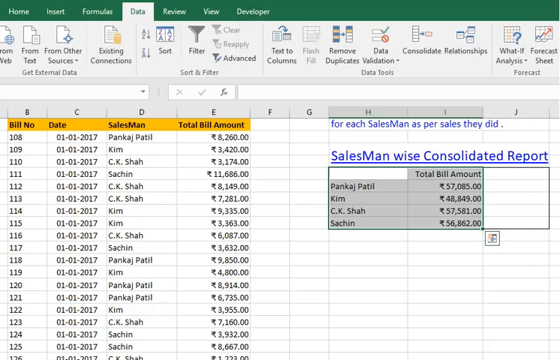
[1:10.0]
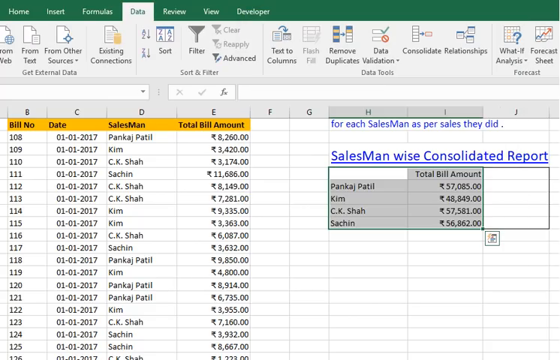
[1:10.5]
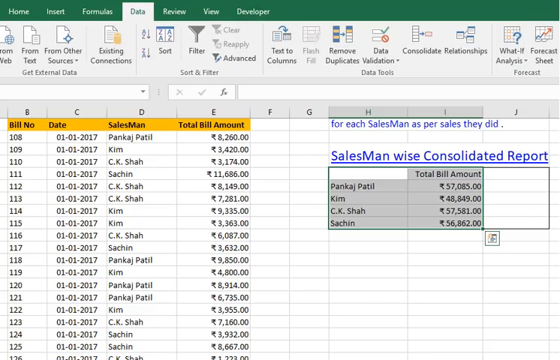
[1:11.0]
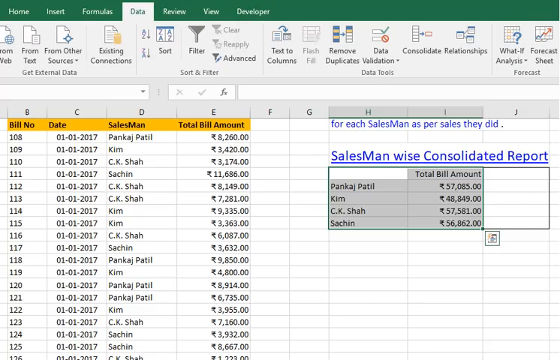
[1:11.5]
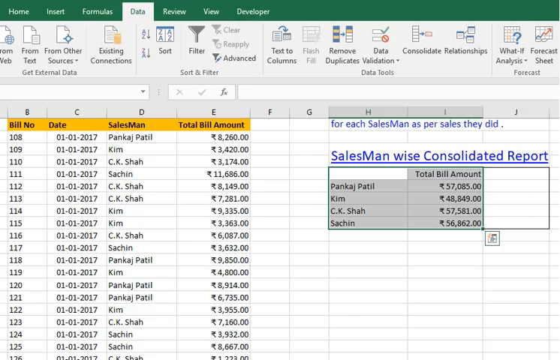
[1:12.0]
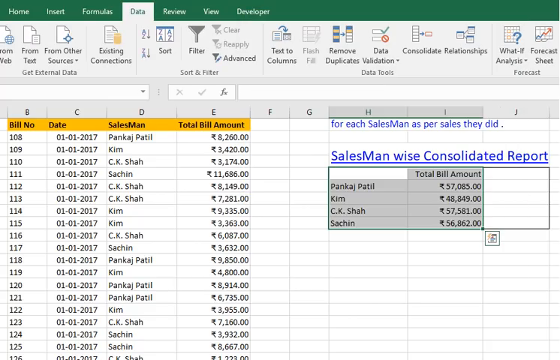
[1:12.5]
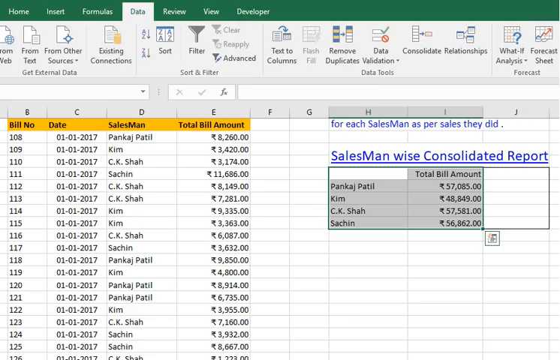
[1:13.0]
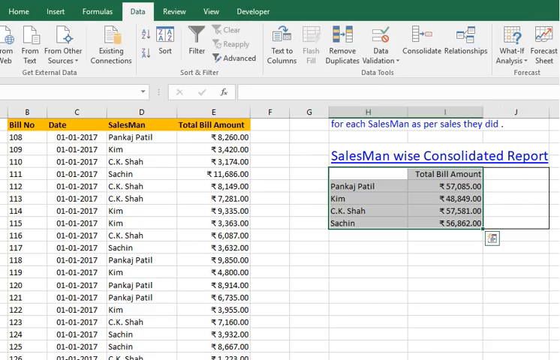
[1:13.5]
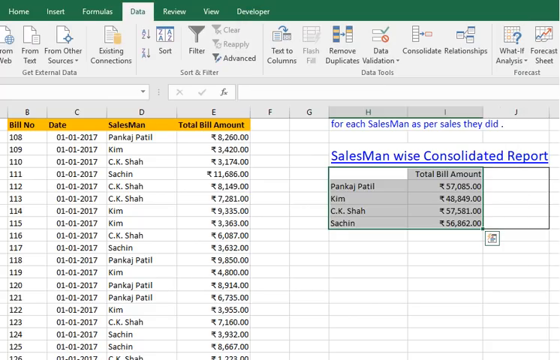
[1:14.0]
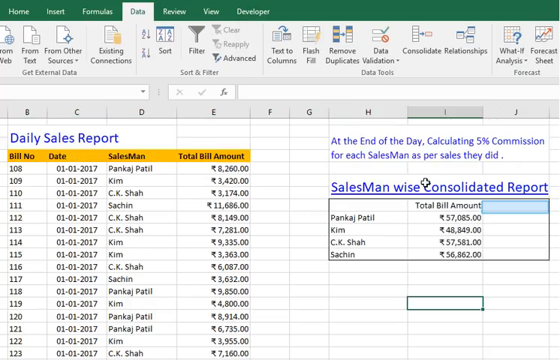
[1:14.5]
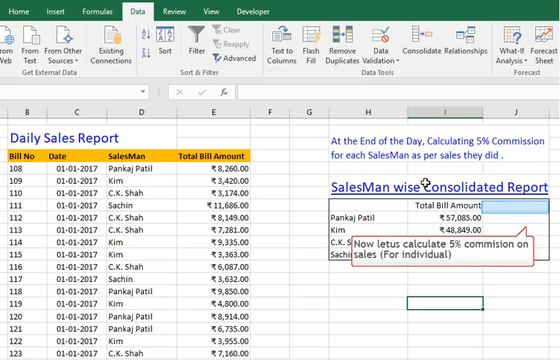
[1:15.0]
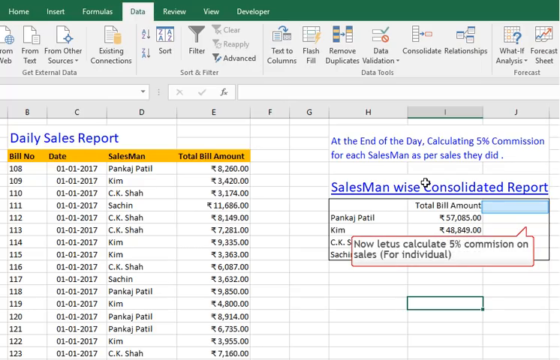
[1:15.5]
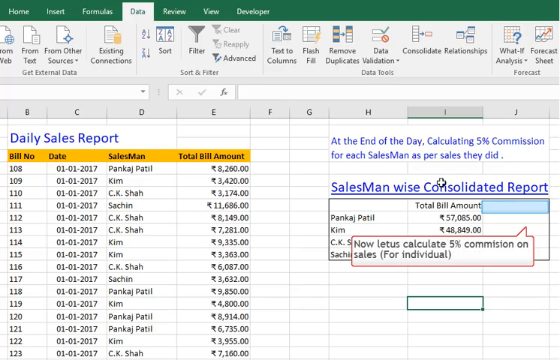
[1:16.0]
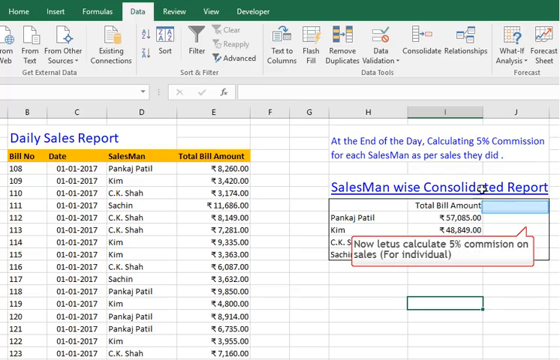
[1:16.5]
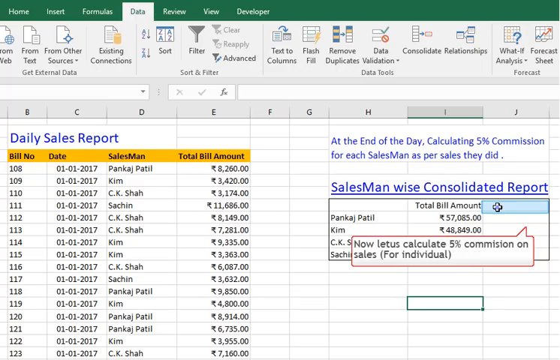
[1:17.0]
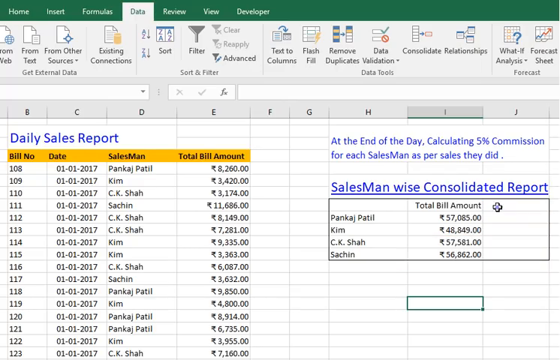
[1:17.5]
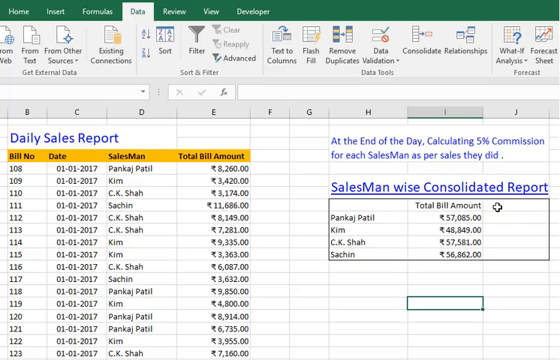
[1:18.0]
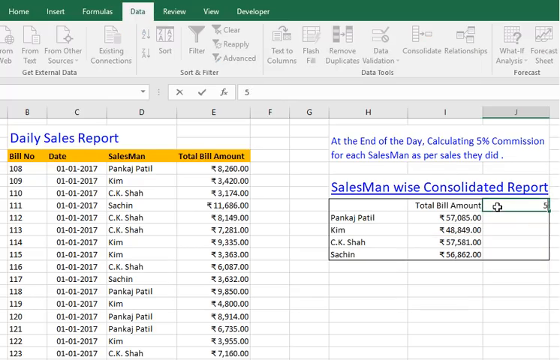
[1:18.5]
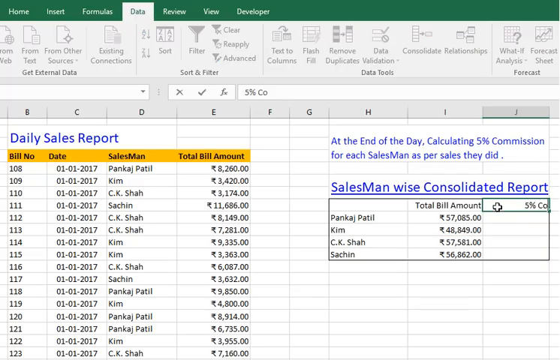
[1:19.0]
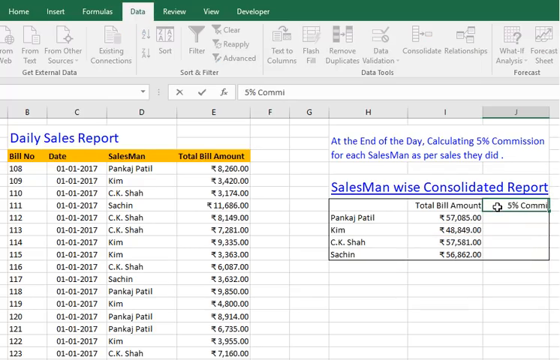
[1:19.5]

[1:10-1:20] The salesman-wise consolidated report has been filled with the total bills amount and the names of people; the only thing left is the percentages to apply to each person. Nothing changes; the setting stays the same, and the text on the screen is readable.